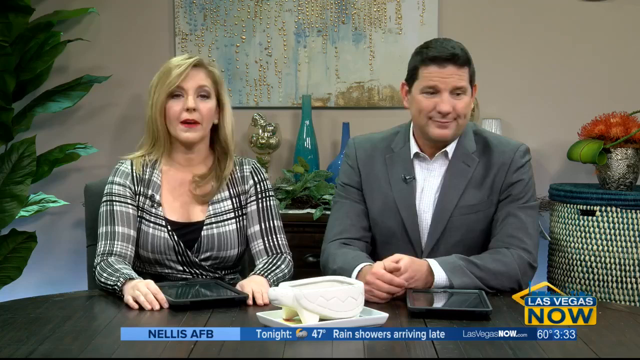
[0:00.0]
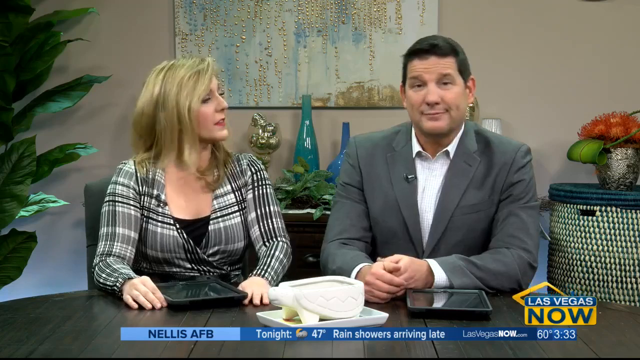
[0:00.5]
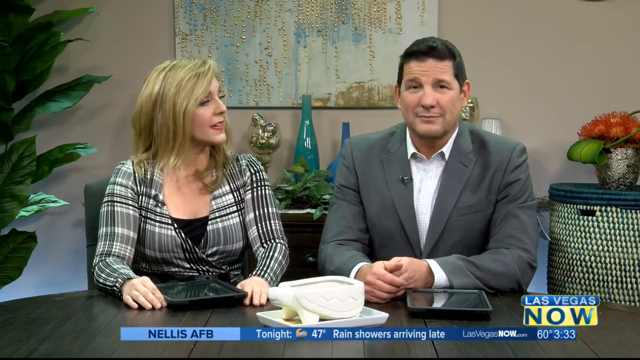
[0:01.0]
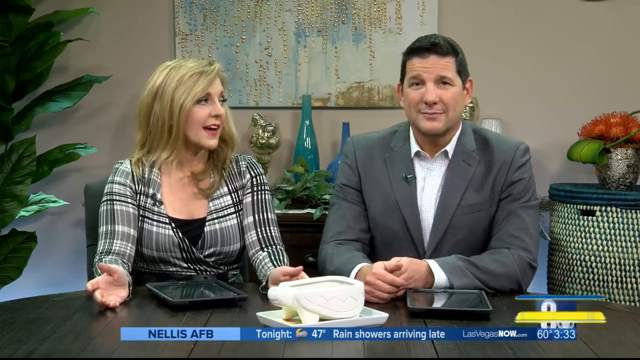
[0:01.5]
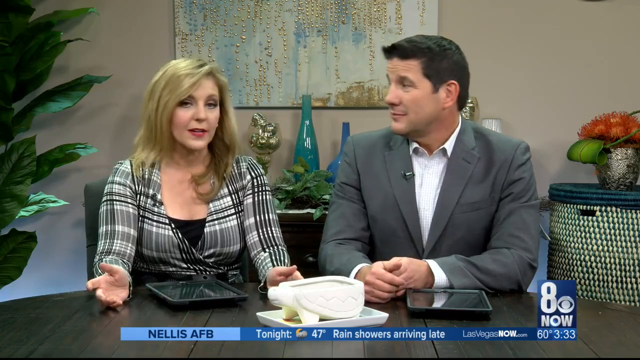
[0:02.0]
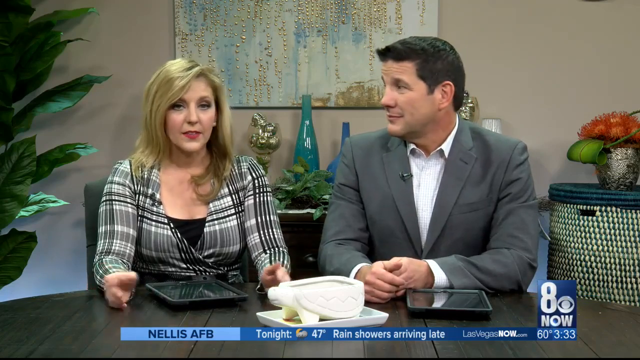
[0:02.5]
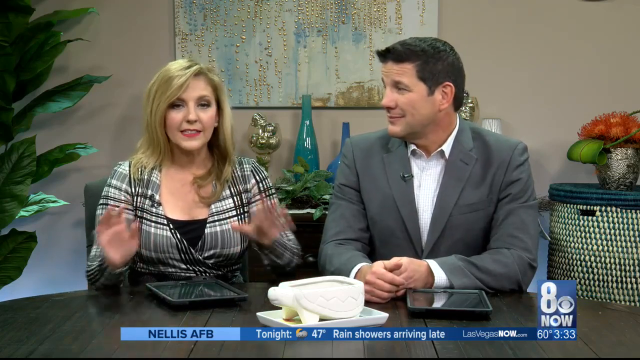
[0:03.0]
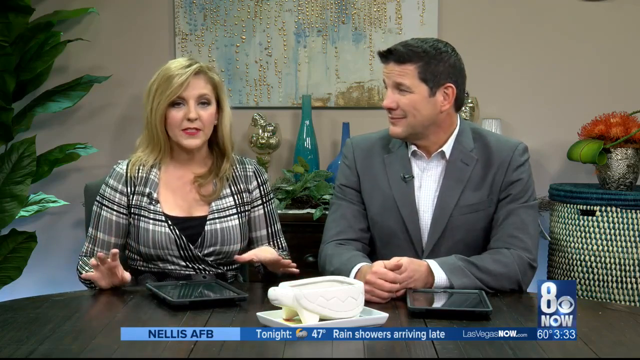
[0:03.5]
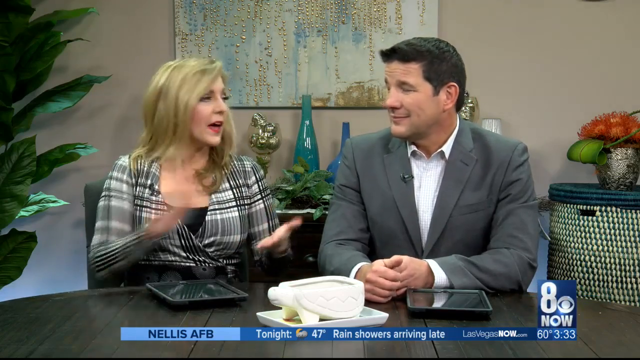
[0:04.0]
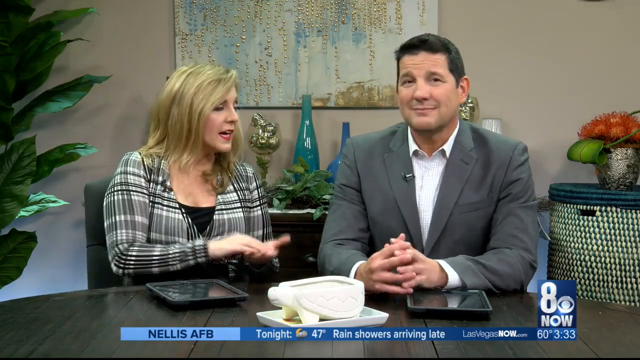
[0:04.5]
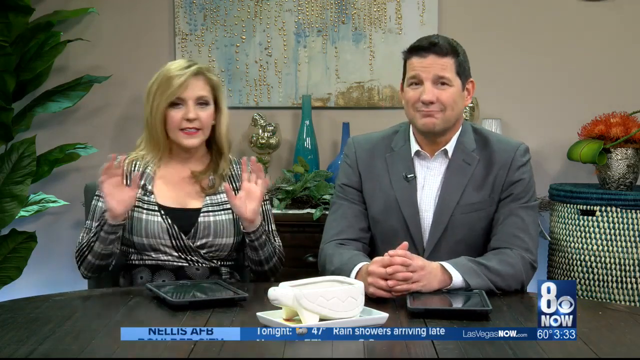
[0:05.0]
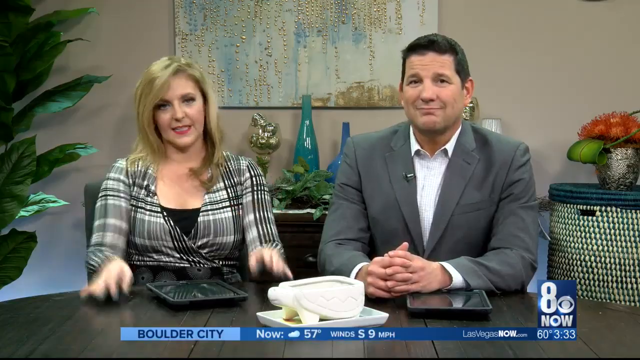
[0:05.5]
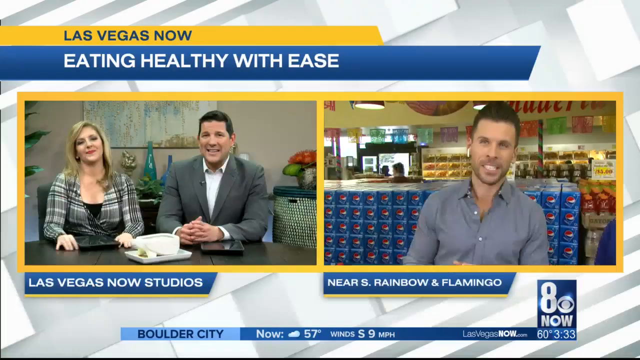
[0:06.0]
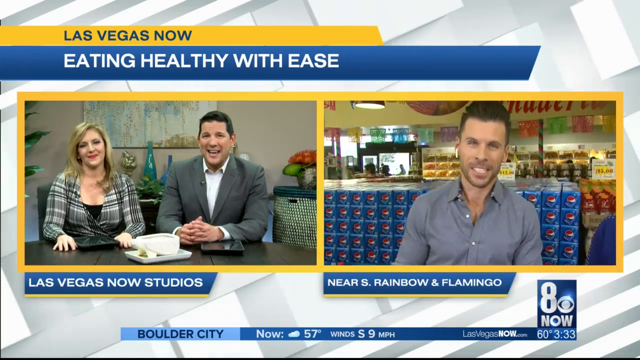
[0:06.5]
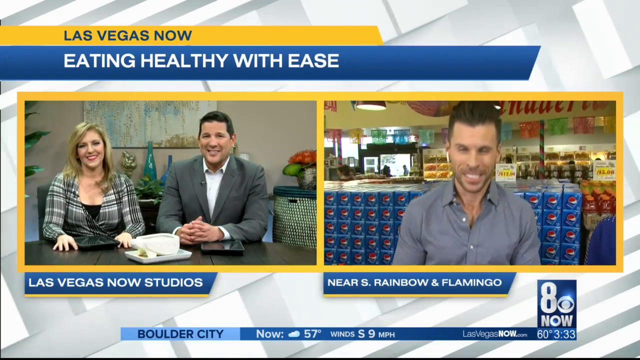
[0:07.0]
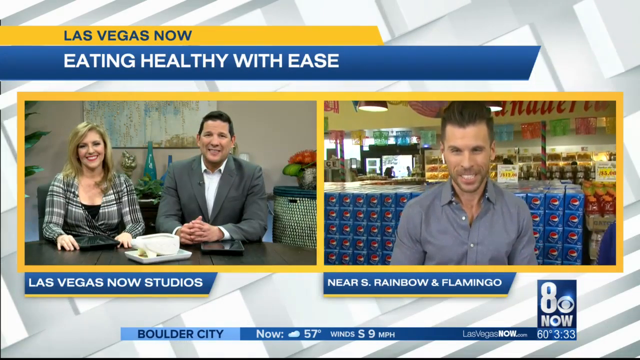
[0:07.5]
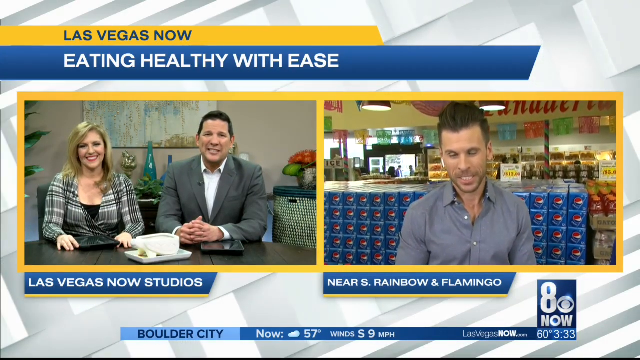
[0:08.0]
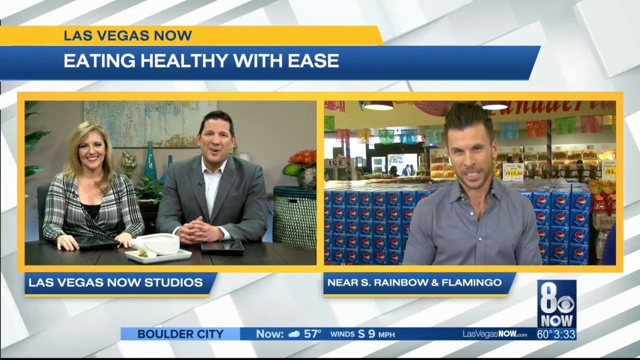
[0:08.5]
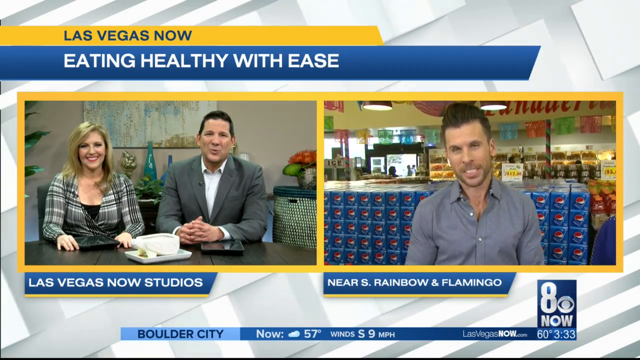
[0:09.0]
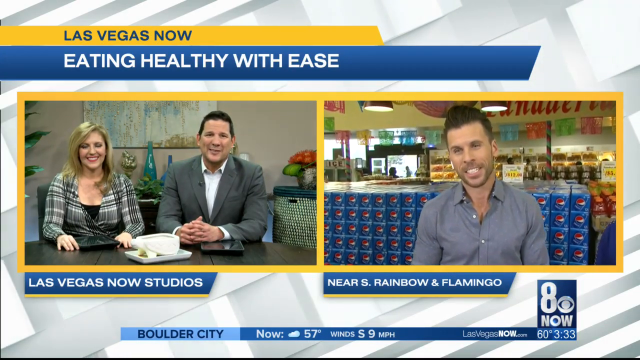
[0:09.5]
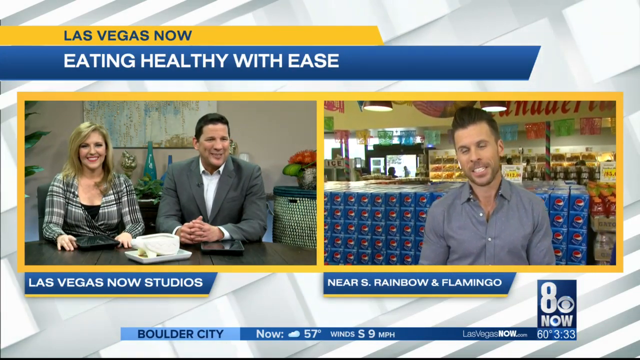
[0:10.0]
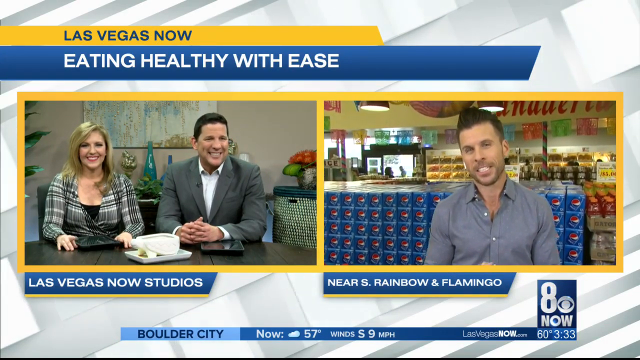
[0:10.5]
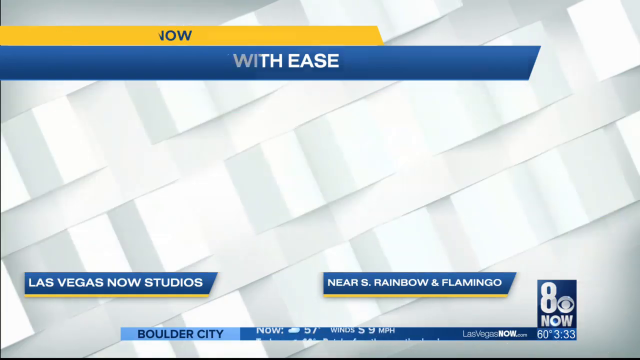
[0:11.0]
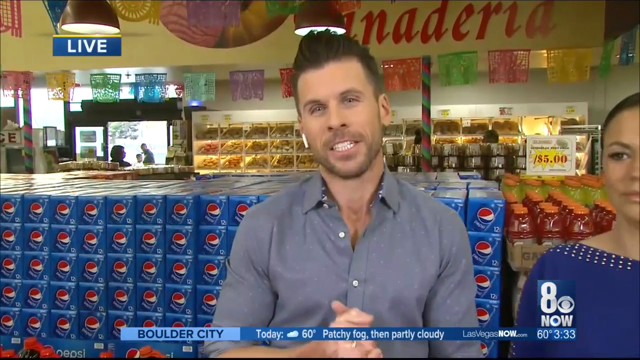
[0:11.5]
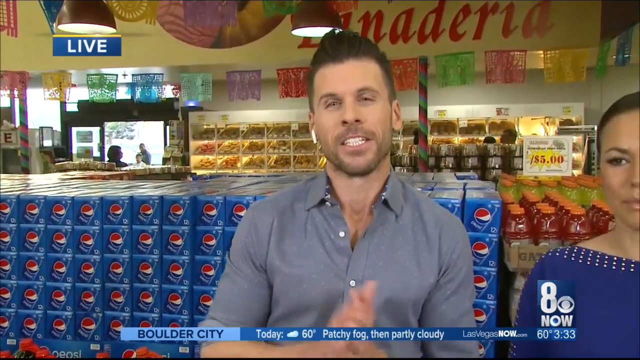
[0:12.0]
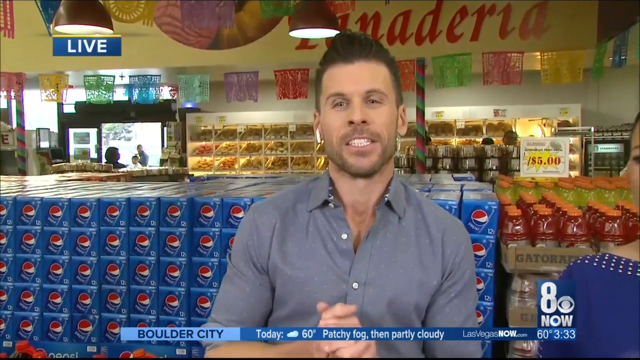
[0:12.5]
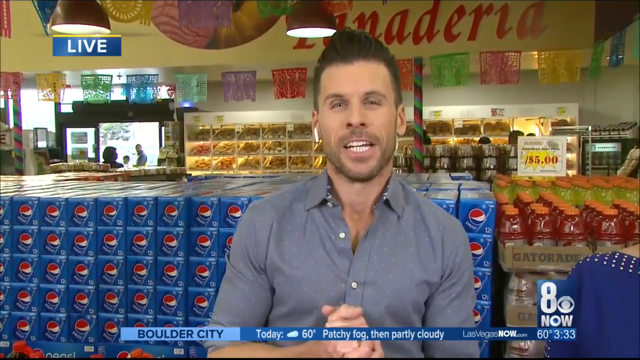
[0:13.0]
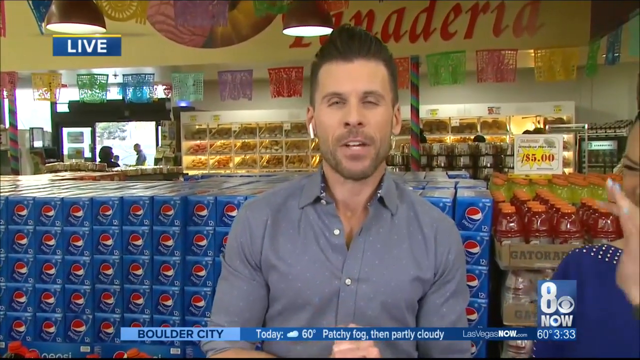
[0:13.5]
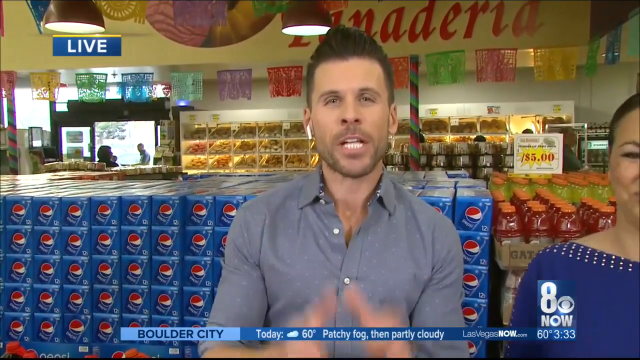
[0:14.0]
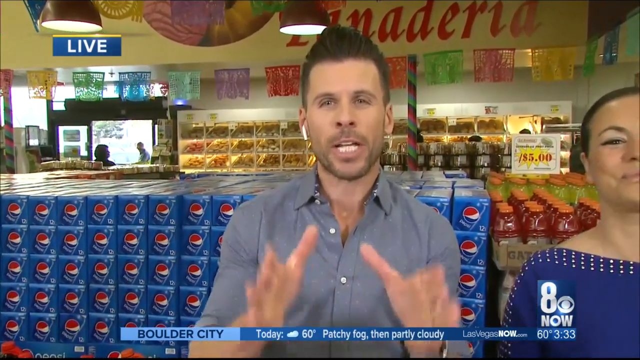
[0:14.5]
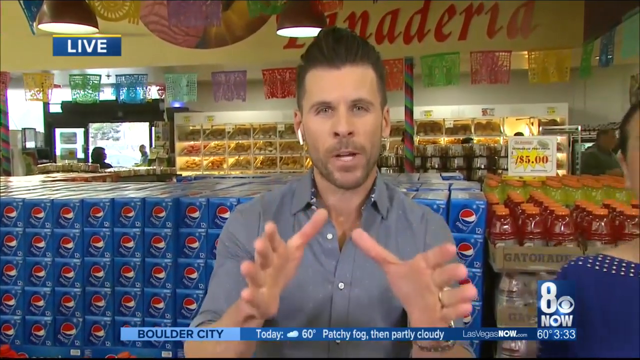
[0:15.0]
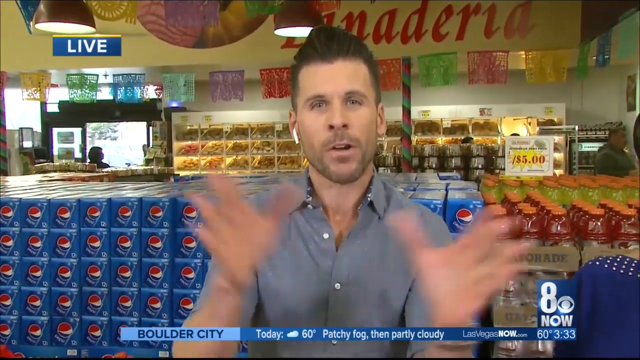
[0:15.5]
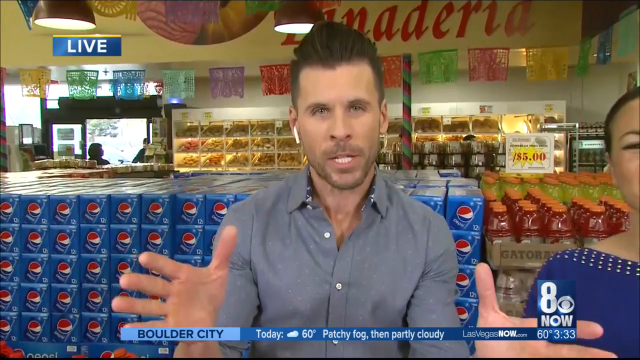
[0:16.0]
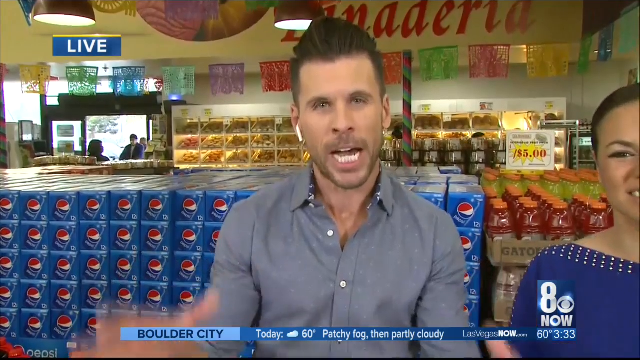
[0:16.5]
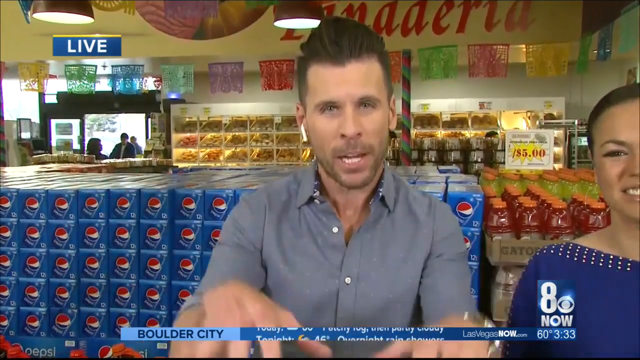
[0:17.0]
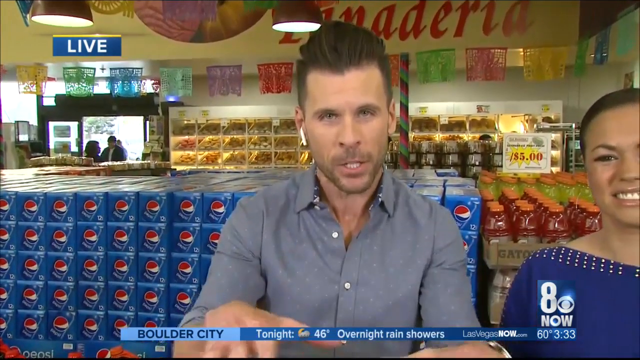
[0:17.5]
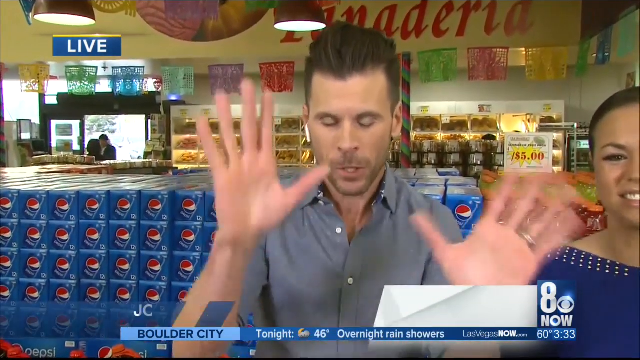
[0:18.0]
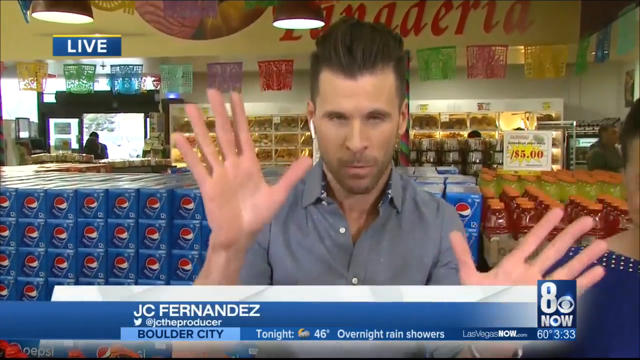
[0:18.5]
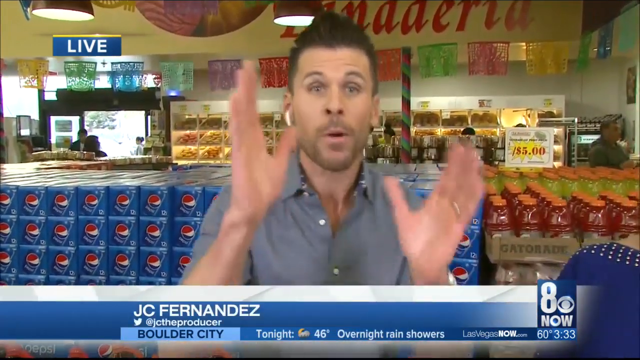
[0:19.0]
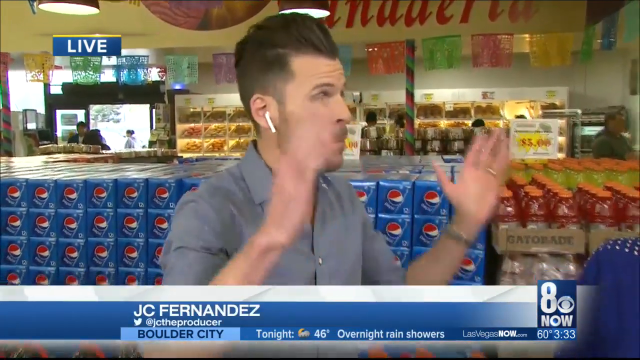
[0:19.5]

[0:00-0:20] Two people sit at a table: a man in a gray suit and white shirt, and a woman in a dress with blonde hair. On-screen text reads "Las Vegas now"; the show is possibly Channel 8 news. Text then reads "Las Vegas now studios." Another man appears with the text "near S rainbow and flamingo"; he seems to be at some type of supermarket. The shot moves to a close-up of him in what appears to be a grocery store, with Pepsis and Gatorades behind him and a little bakery section. The screen says "live," and there is a lady next to him. Text reads "Boulder City temperatures." His name is JC Fernandez, and he is possibly wearing little AirPods in his ear. He appears to turn to talk to the lady next to him, who is maybe the owner of the store.